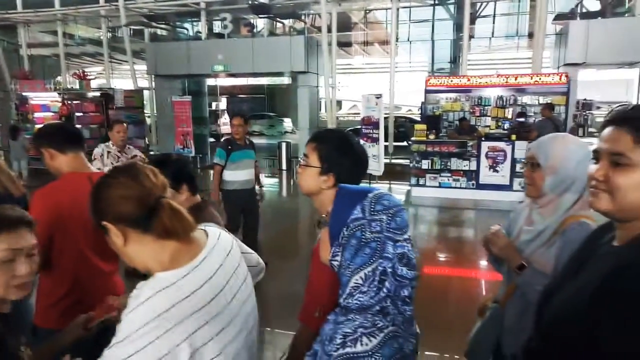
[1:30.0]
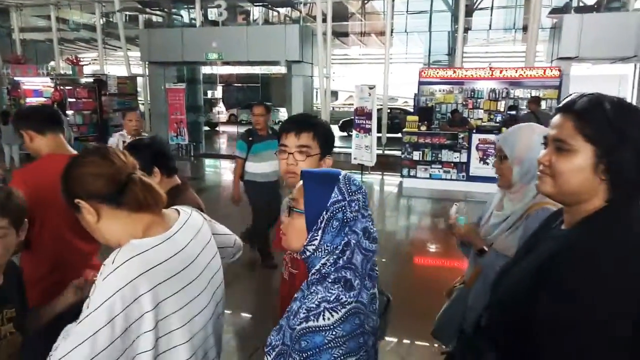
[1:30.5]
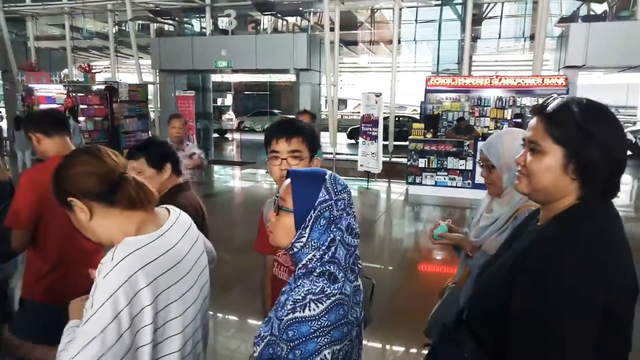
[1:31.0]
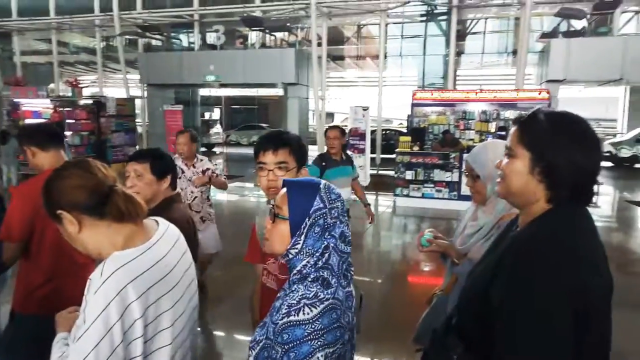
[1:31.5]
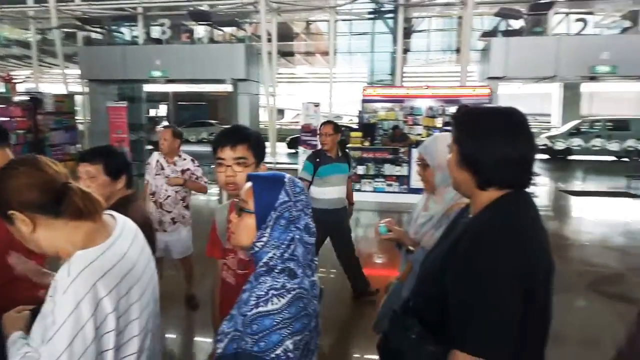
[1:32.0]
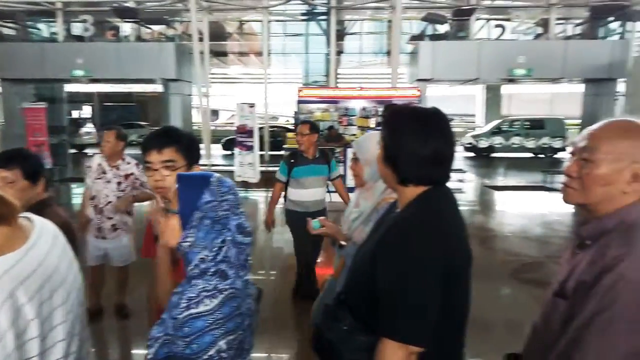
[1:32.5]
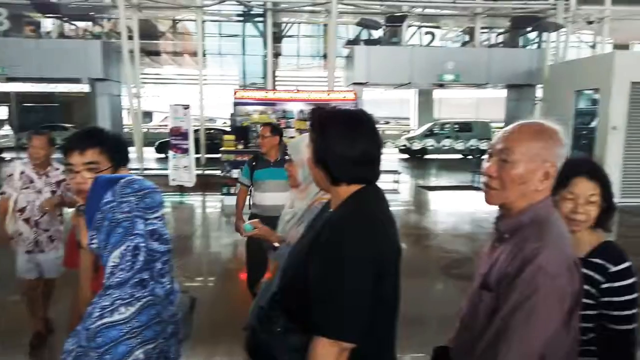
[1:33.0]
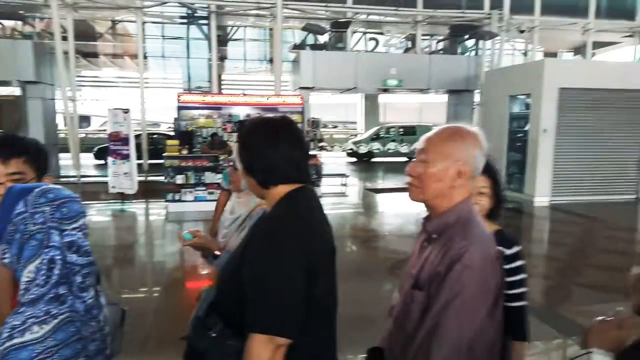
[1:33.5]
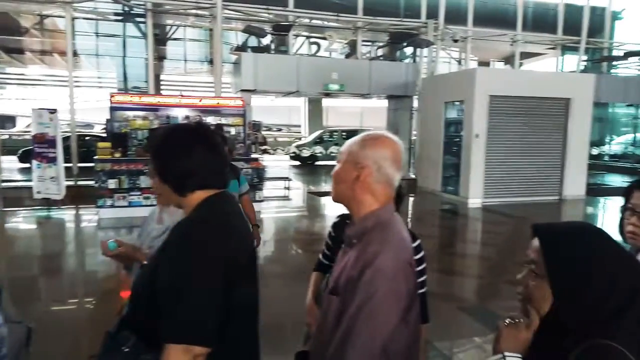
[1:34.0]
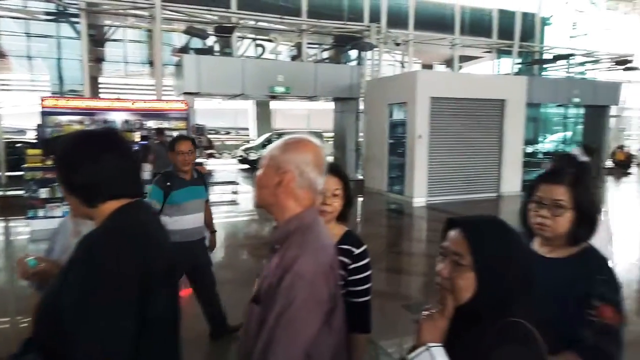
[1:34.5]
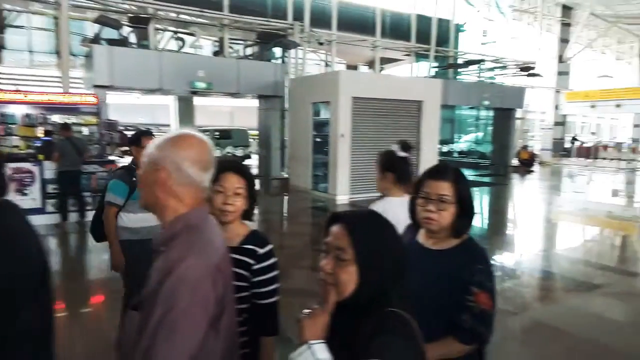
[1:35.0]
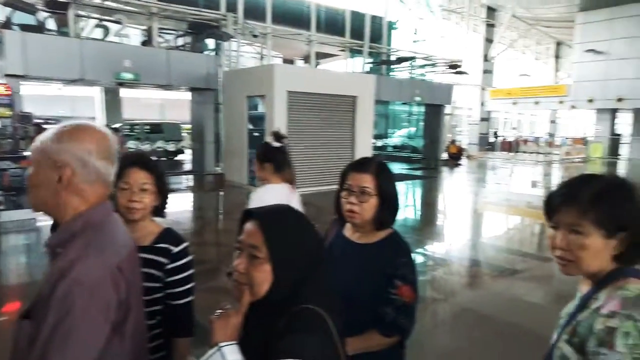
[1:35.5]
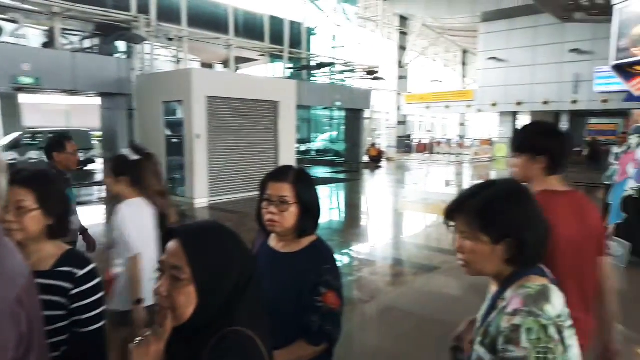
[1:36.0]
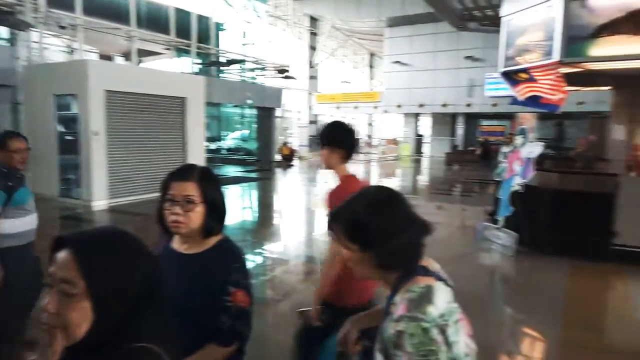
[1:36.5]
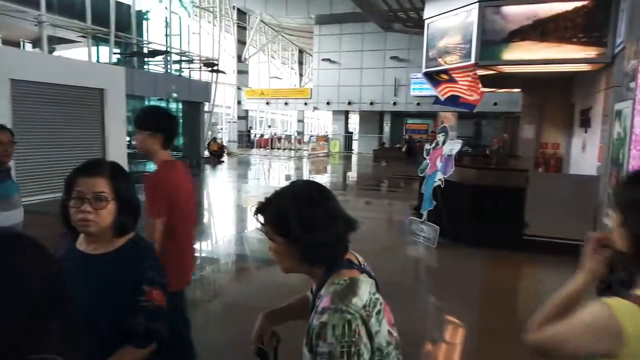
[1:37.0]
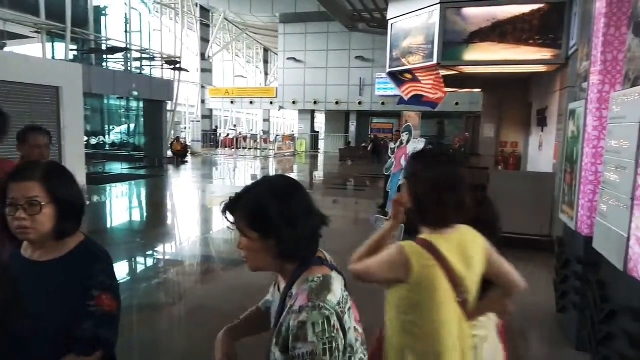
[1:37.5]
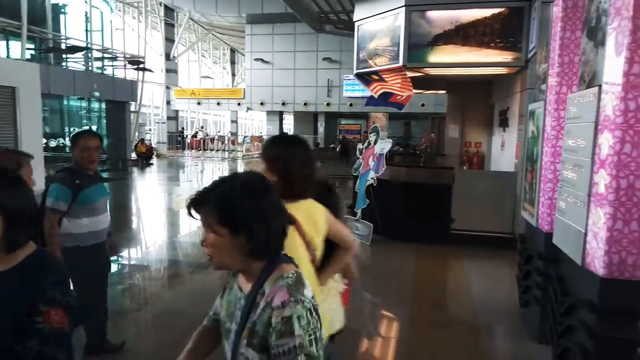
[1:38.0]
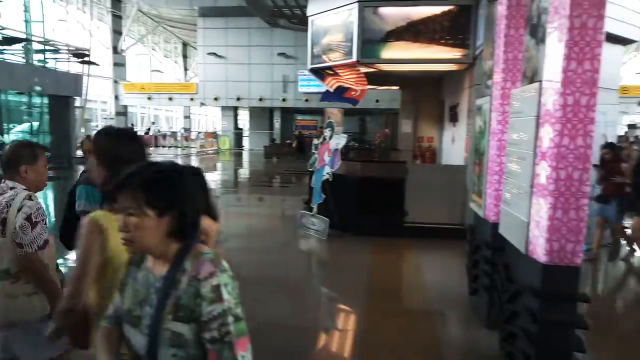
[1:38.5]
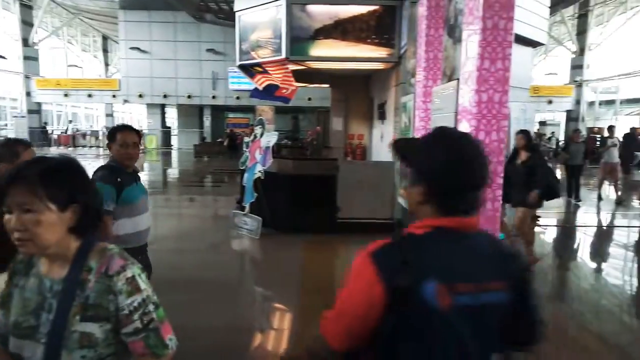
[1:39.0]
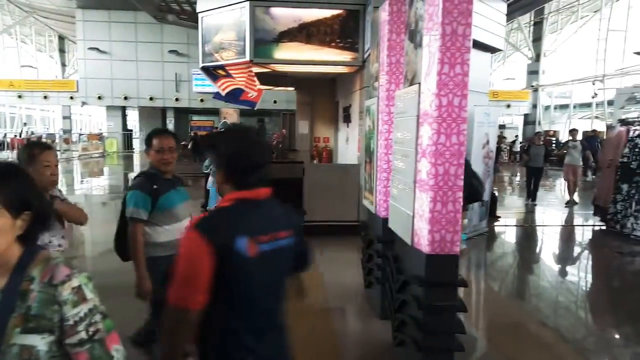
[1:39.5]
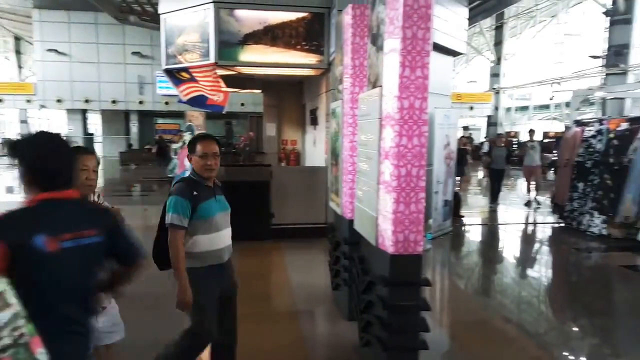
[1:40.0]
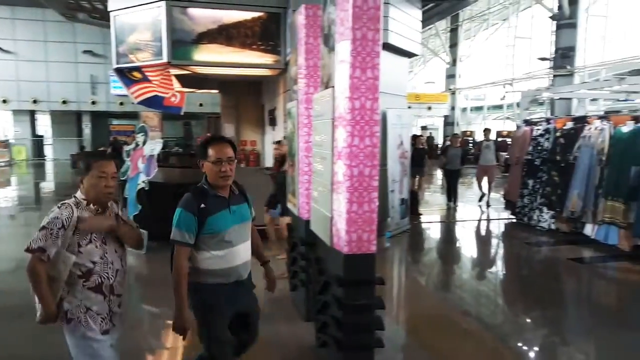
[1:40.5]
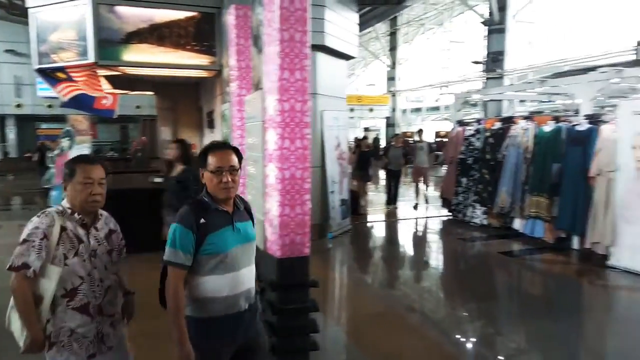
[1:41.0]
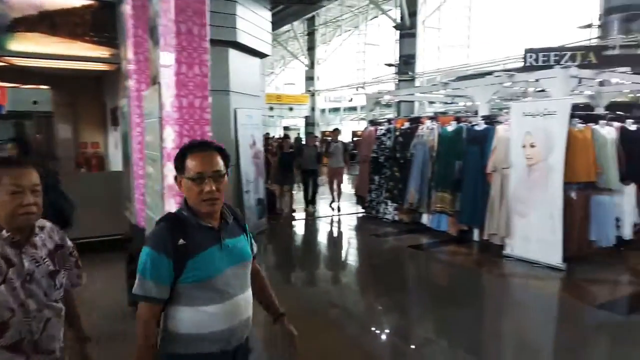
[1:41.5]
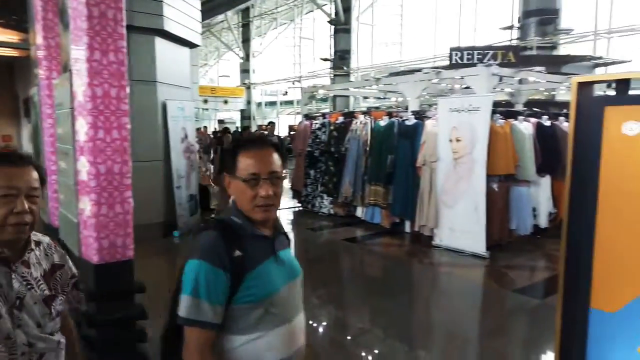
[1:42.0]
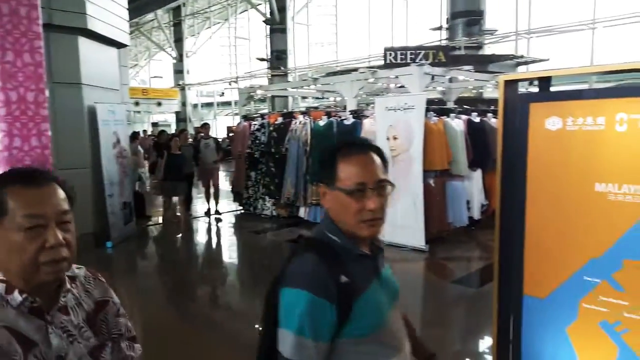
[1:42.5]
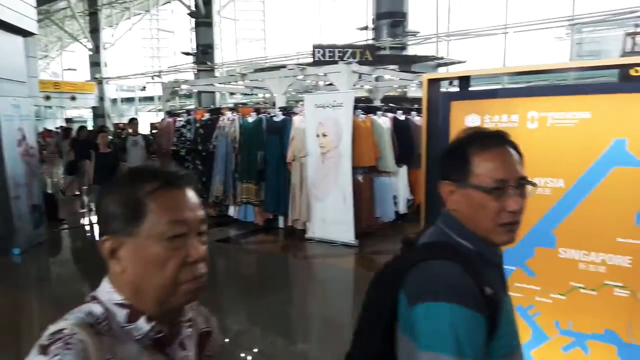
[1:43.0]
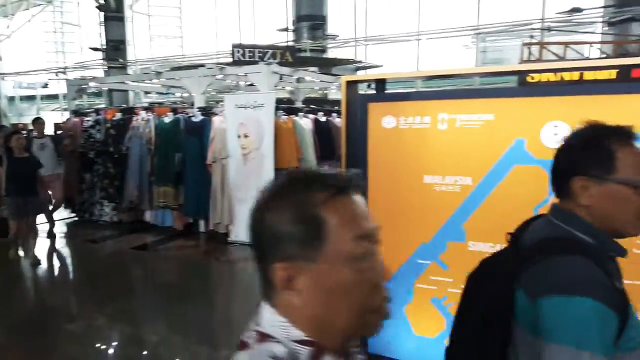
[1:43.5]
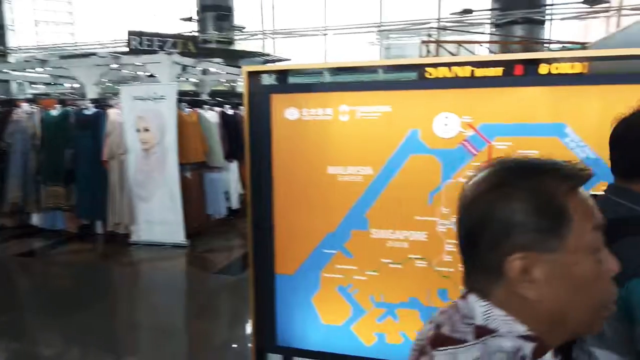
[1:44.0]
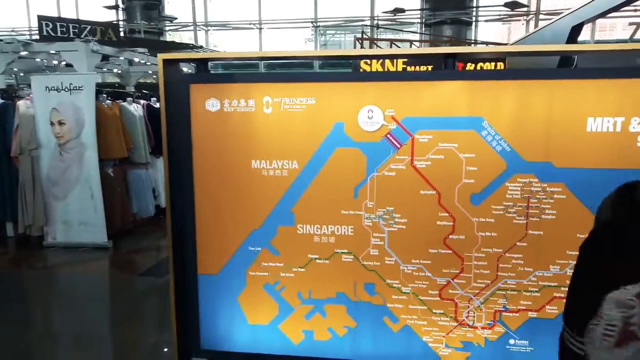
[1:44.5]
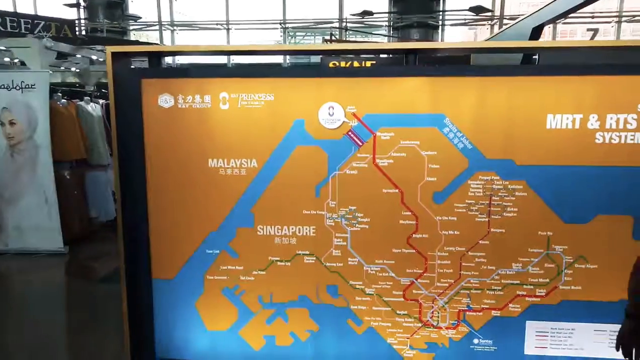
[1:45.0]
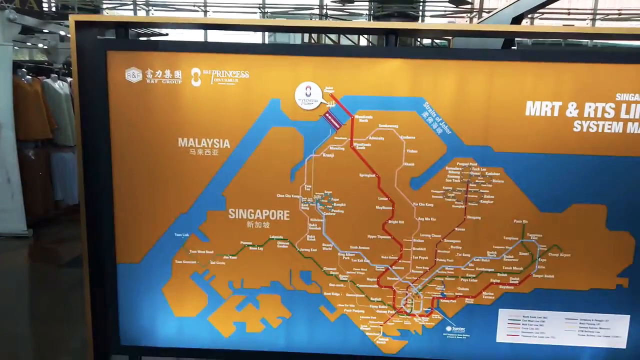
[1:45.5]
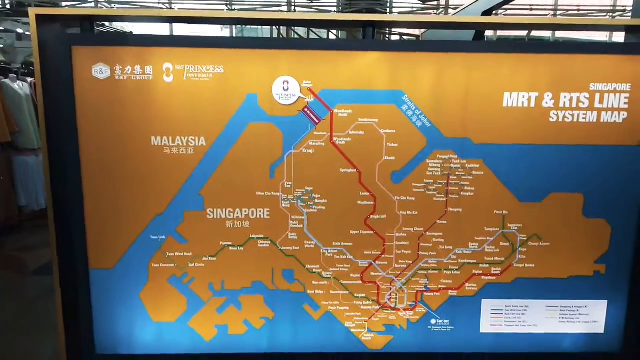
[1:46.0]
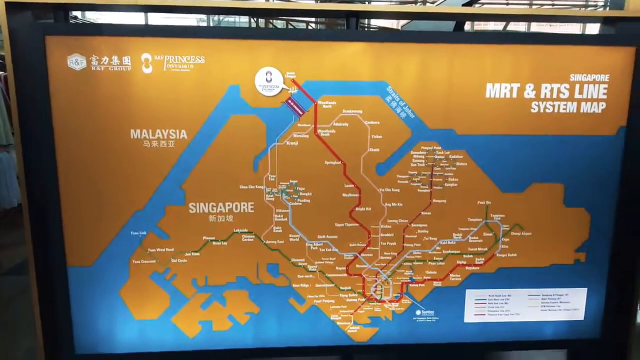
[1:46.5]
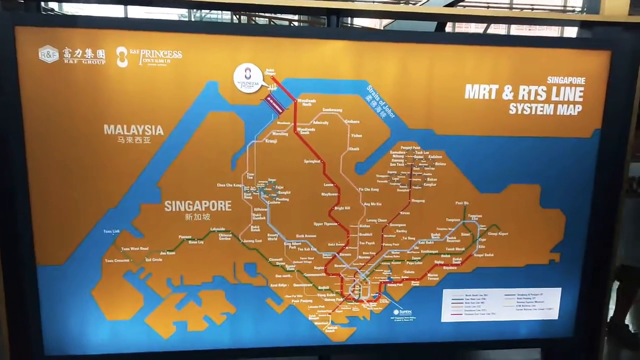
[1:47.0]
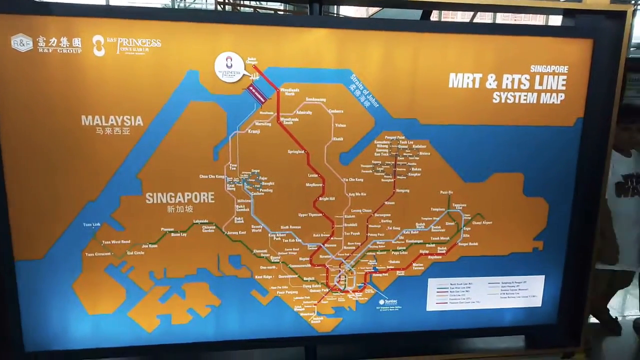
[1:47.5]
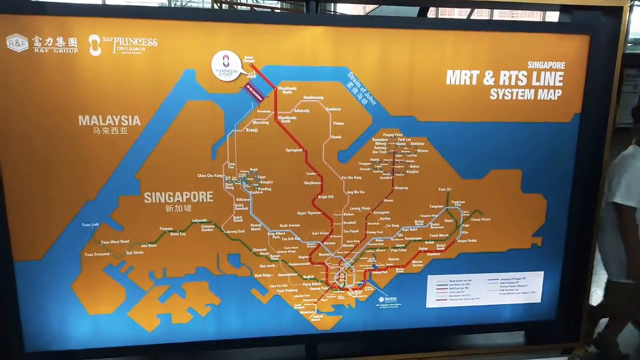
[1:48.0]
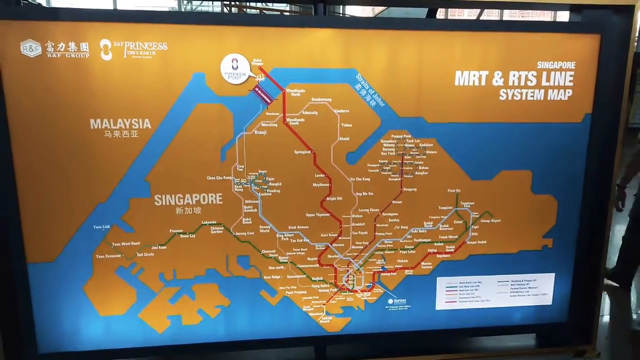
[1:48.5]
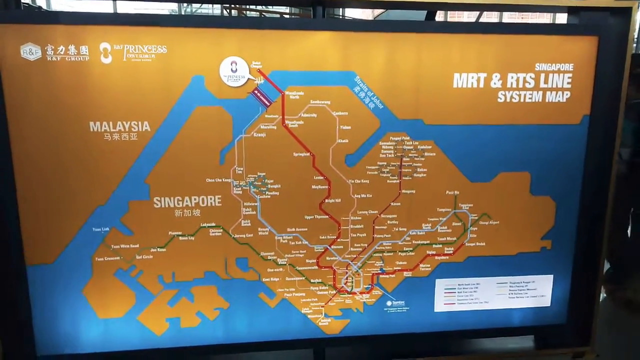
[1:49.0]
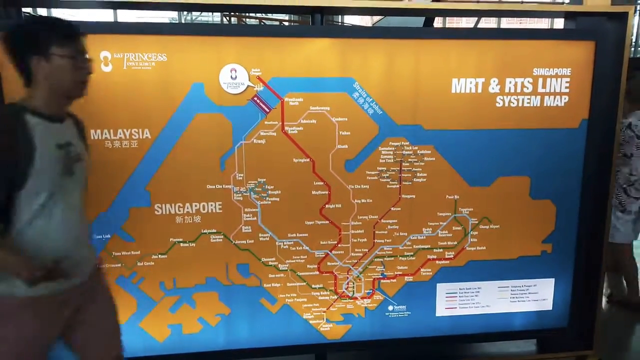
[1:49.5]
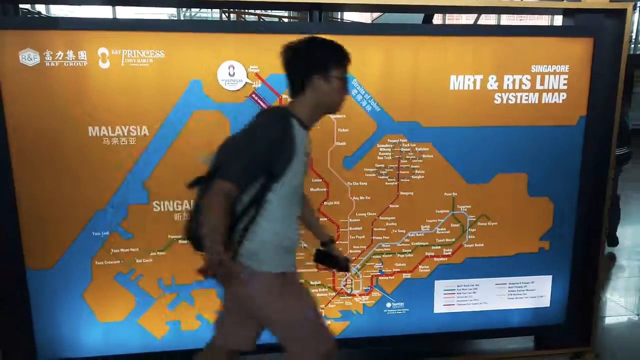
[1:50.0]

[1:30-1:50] Over a dozen people stand in line inside a transit hub, waiting to purchase tickets. As the video rotates, it shows the interior of the transit hub and its amenities, including kiosks that sell different goods and perhaps food. The outside of the transit hub is briefly visible, with cars parked along the exterior for picking up and dropping off passengers. The video then rotates and ends on a map of Singapore and the transit system in different colored lines, with the transit lines and their stations visible. The map is brown with the waterways in white, and the transit lines are in red, what appears to be yellow, and brown. Many of the people appear to be travelers, carrying backpacks, luggage, and purses.